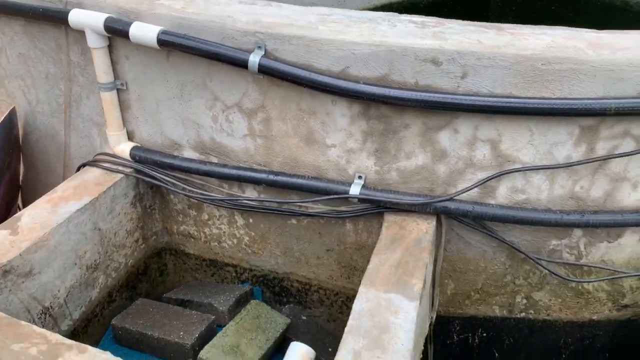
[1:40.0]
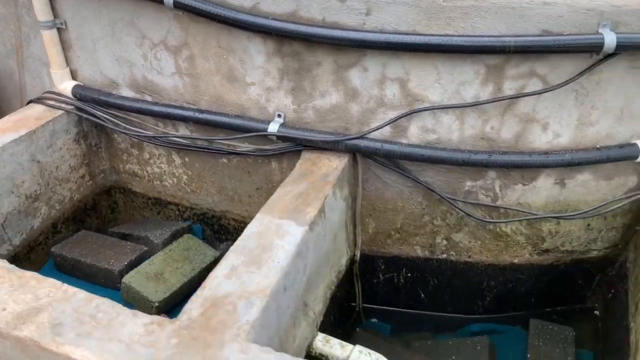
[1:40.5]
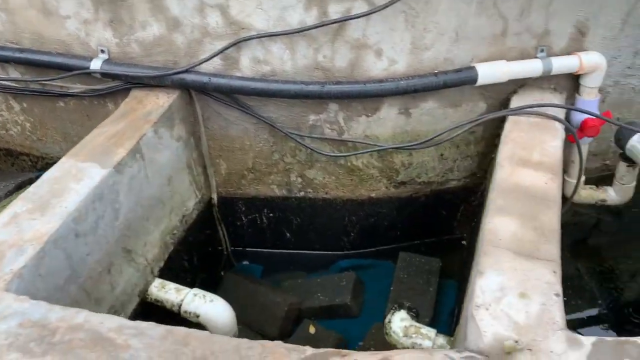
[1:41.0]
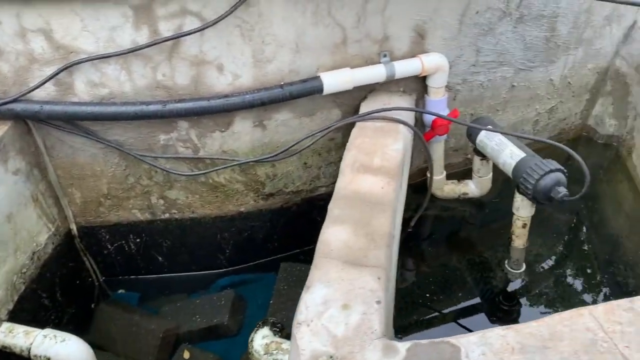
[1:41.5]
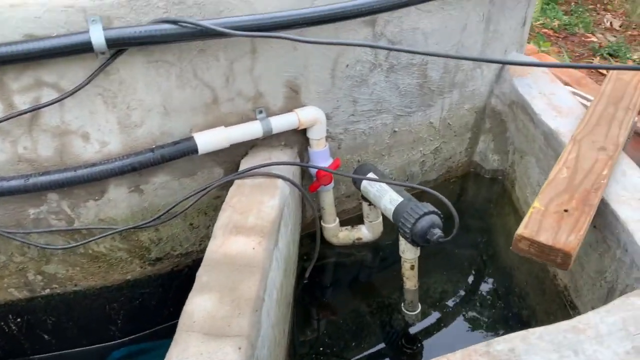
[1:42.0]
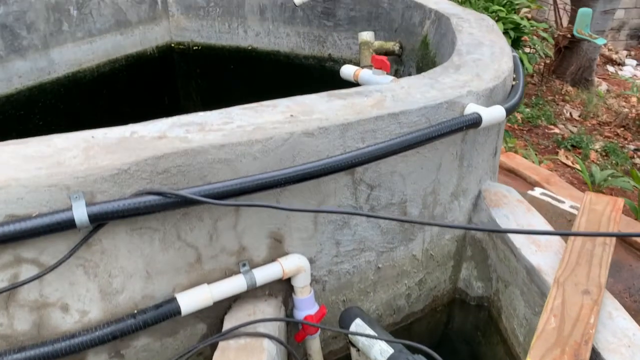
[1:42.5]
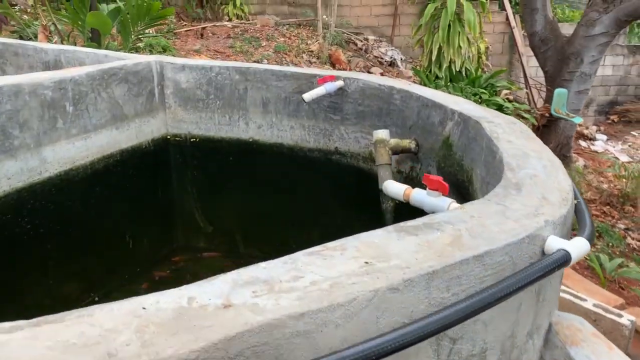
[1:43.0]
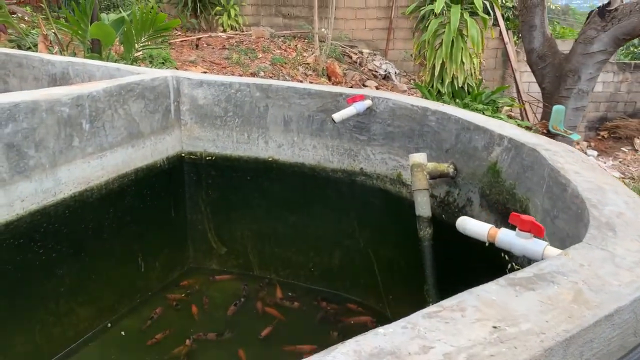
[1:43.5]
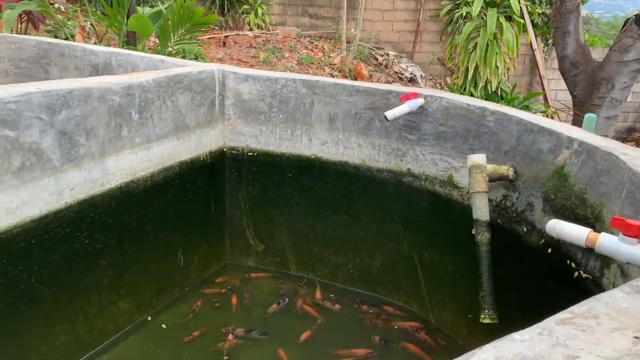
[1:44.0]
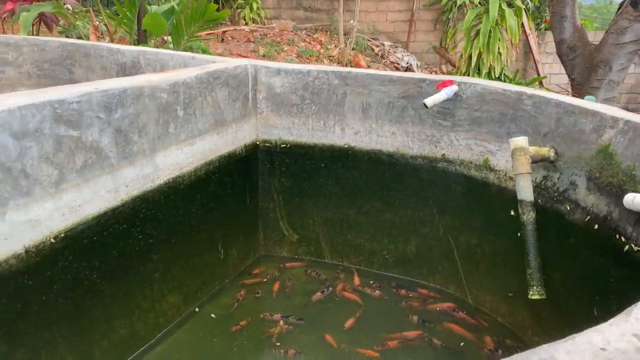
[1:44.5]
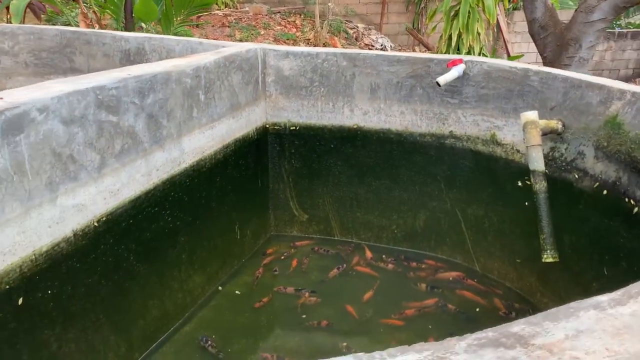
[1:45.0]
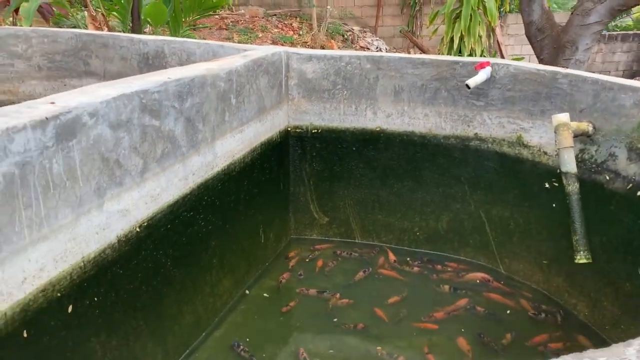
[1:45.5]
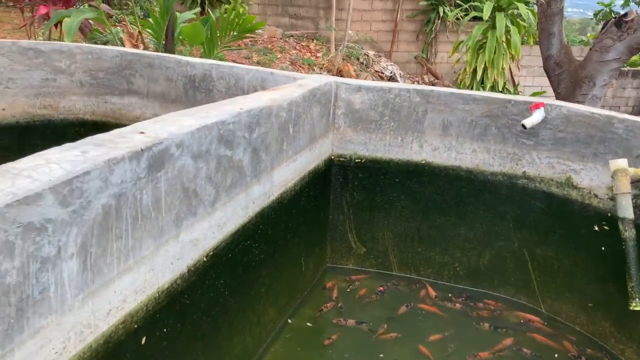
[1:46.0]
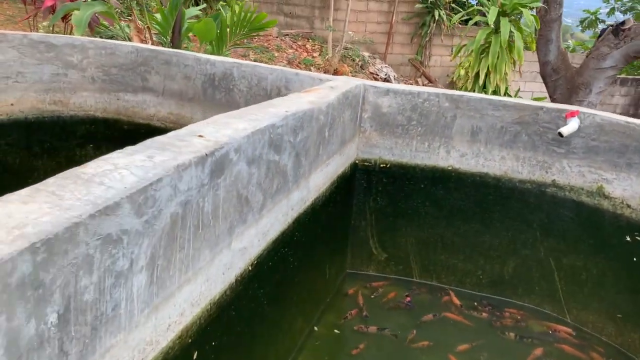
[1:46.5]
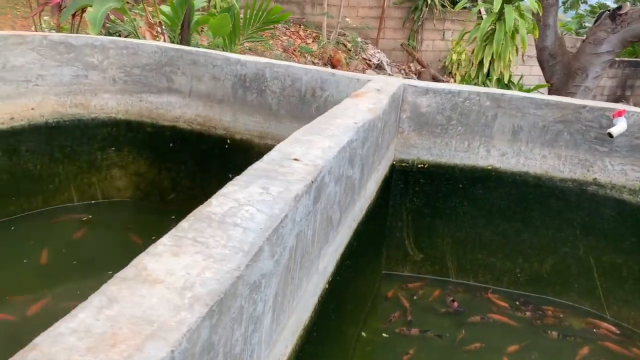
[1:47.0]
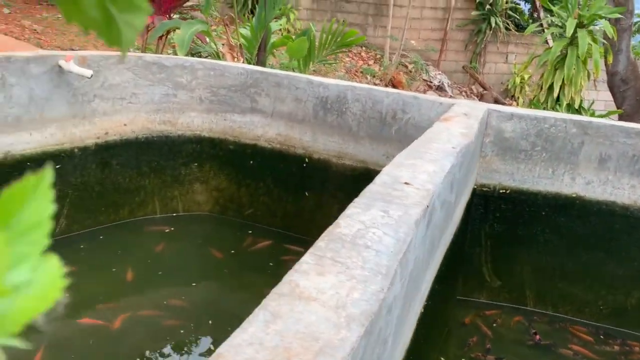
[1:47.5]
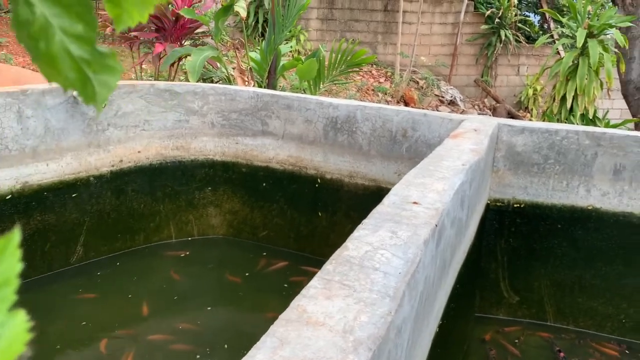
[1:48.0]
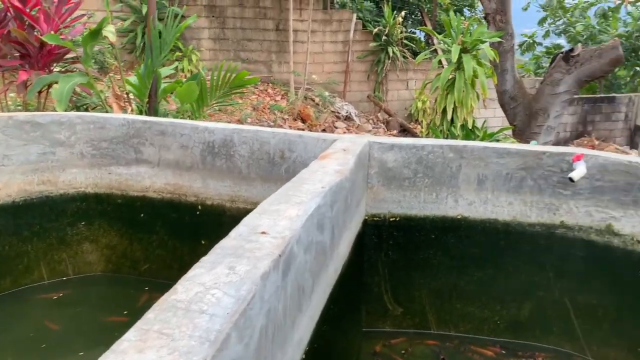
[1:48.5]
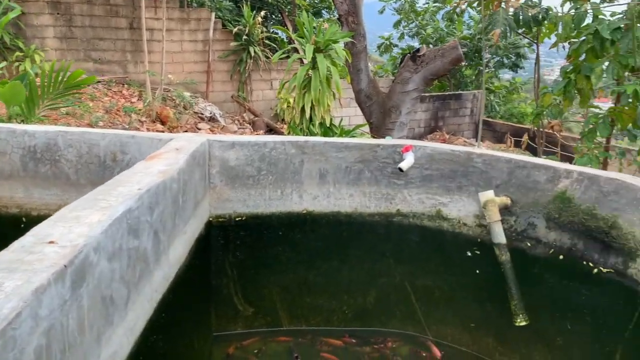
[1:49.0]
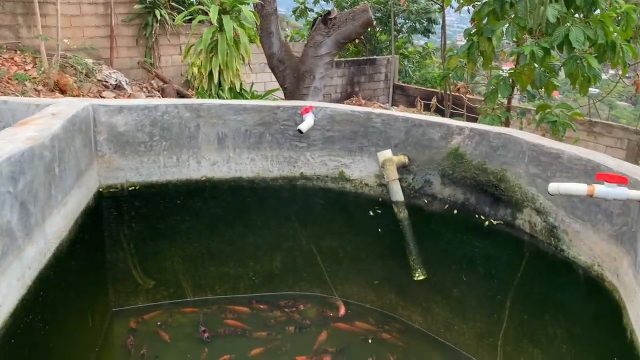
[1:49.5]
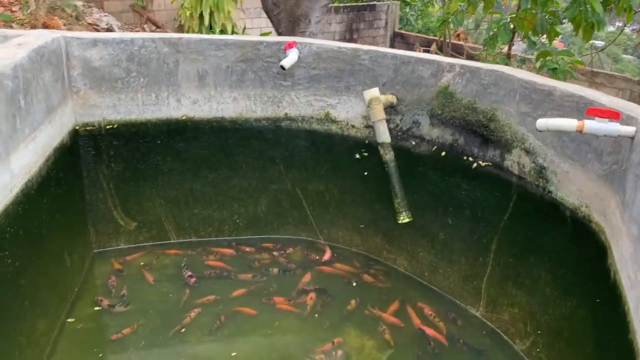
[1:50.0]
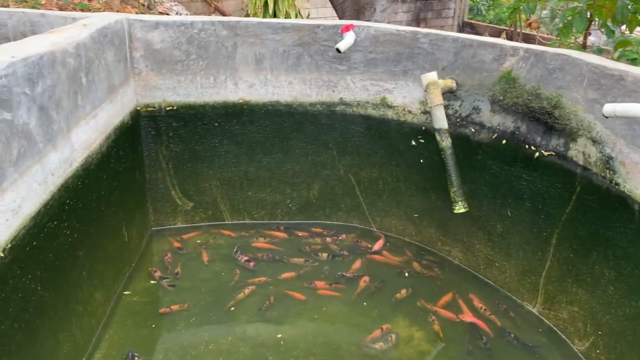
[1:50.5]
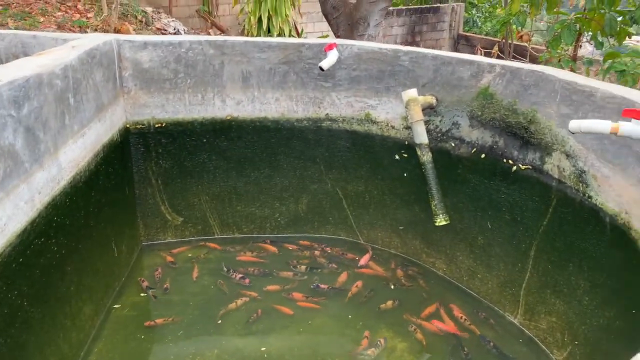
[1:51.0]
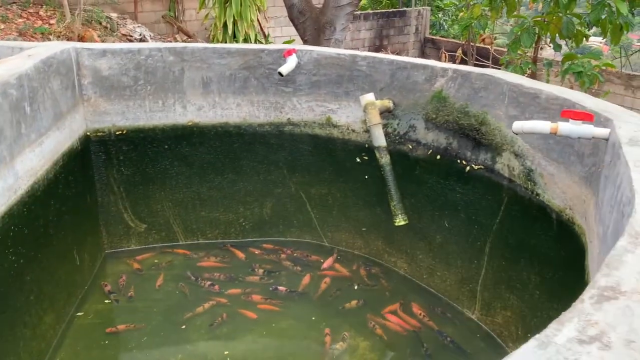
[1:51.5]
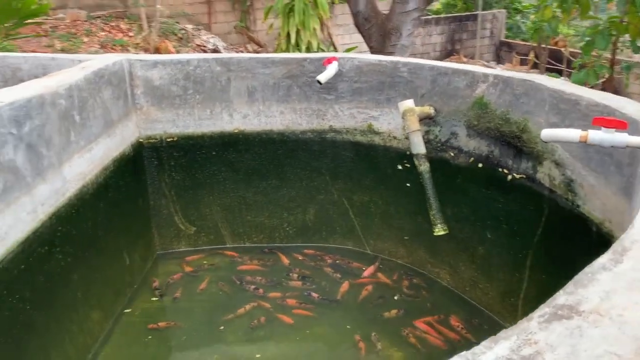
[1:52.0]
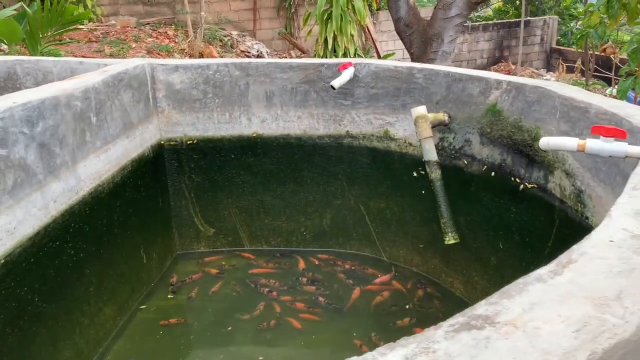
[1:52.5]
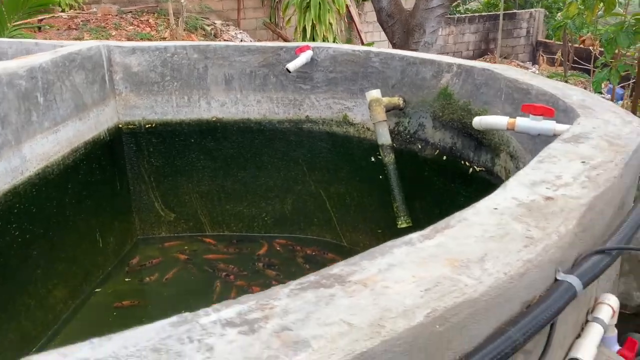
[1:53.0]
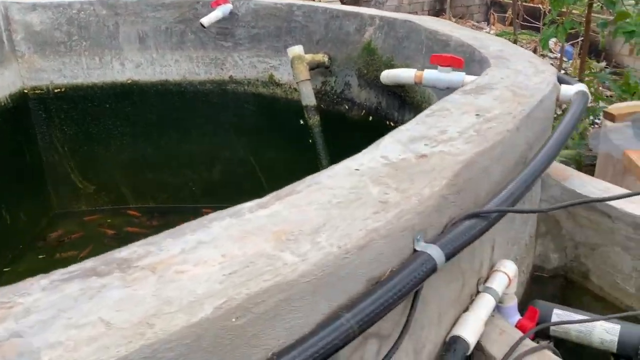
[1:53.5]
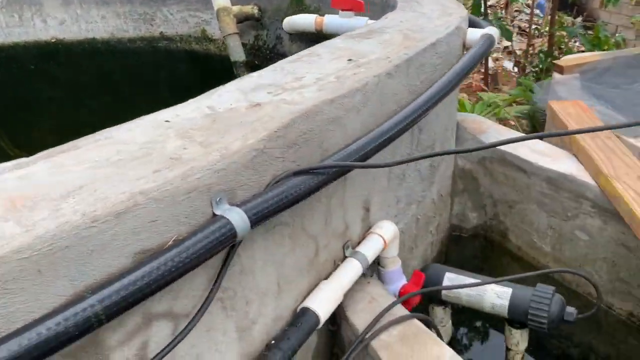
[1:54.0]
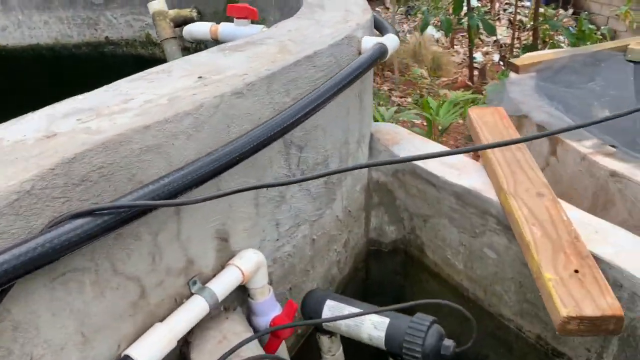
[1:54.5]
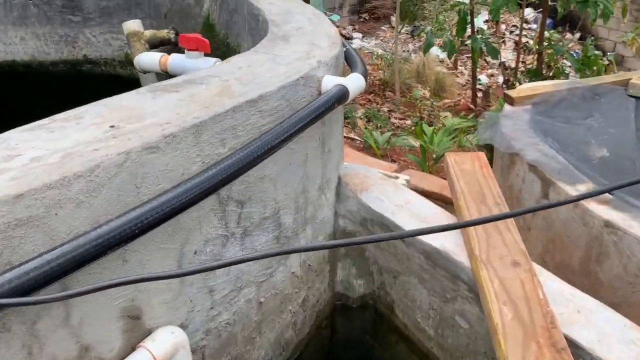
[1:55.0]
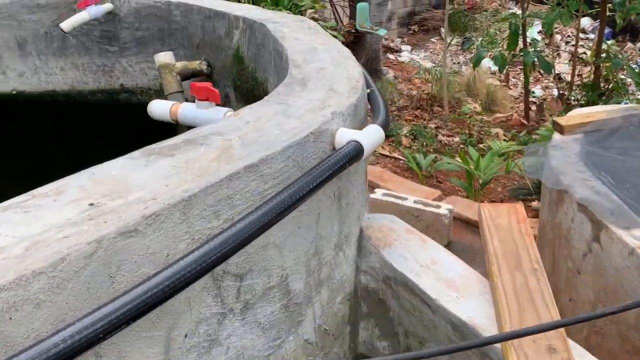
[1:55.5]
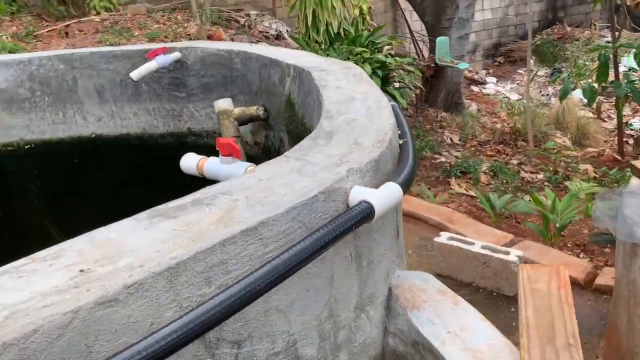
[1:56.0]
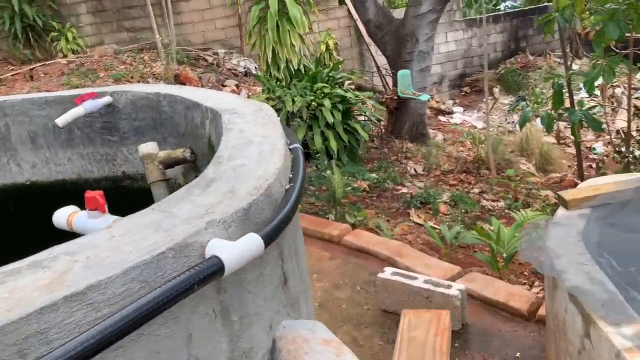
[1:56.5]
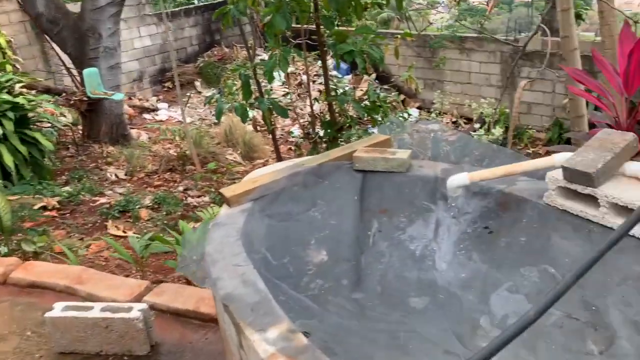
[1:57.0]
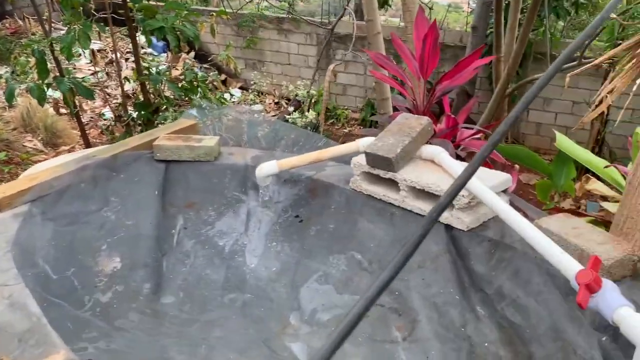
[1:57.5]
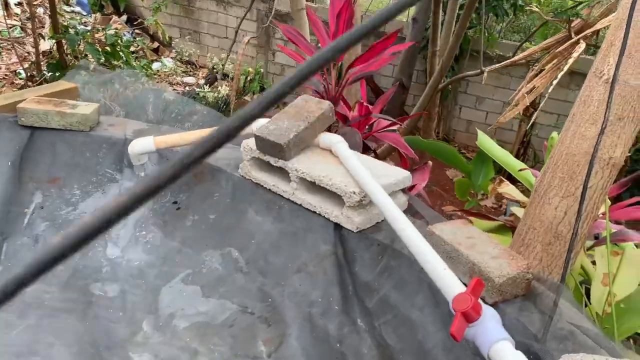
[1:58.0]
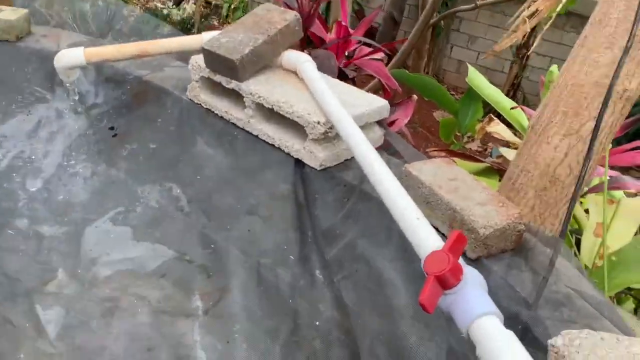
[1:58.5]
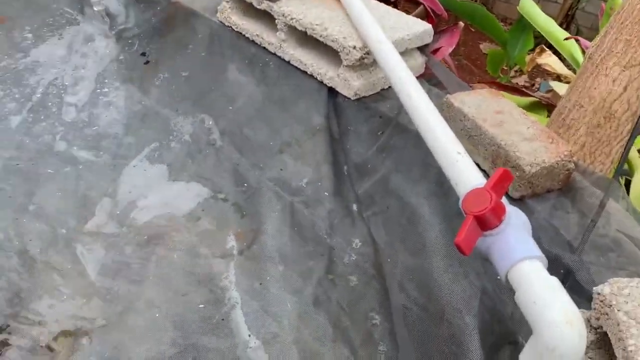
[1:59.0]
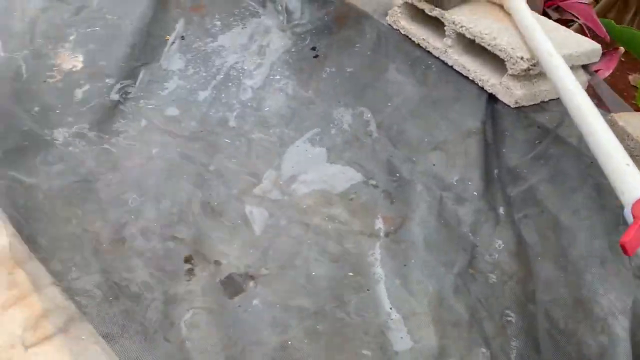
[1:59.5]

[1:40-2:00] Cement tanks with separator pieces are shown. Black piping is hooked into a white pipe, and gray brackets are mounted to the exterior cement wall. Gray and brown cinder blocks are at the bottom, with the rounded section up top, green lining inside the tank, a white pipe sticking out over the tanks, and fish at the bottom in the water. Green trees and gray brick walls are in the background. Some of the white piping has green mildew on it. A flat piece of brown wood is on the right side. More gray cinder blocks hold up the white pipes, and gray meshing is used as a cover over the smaller tank.